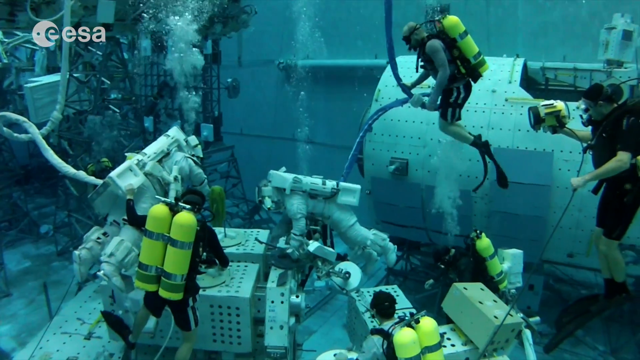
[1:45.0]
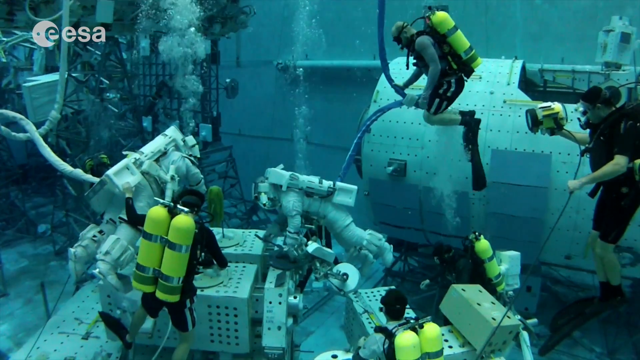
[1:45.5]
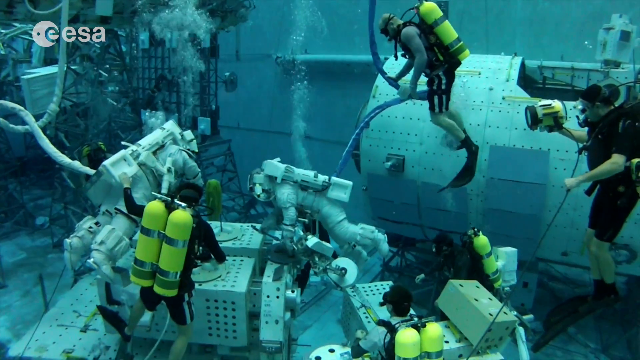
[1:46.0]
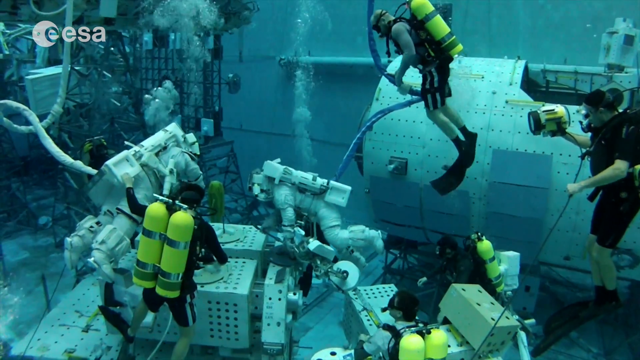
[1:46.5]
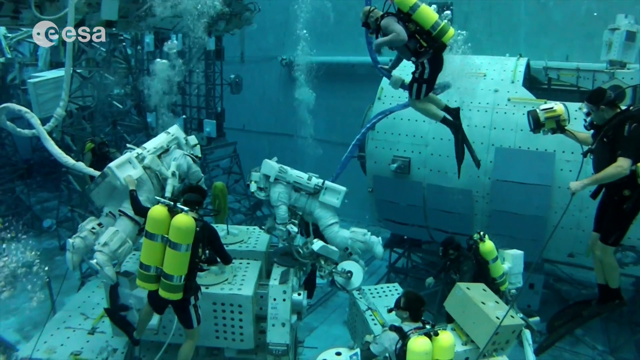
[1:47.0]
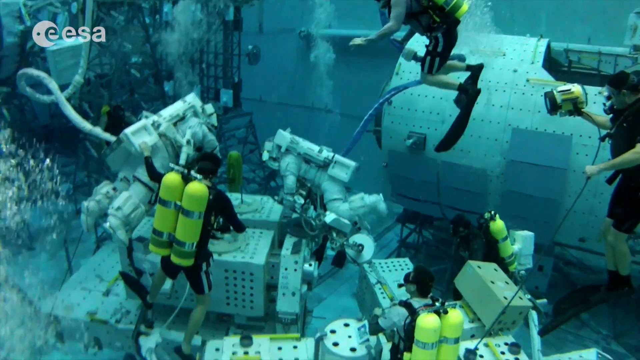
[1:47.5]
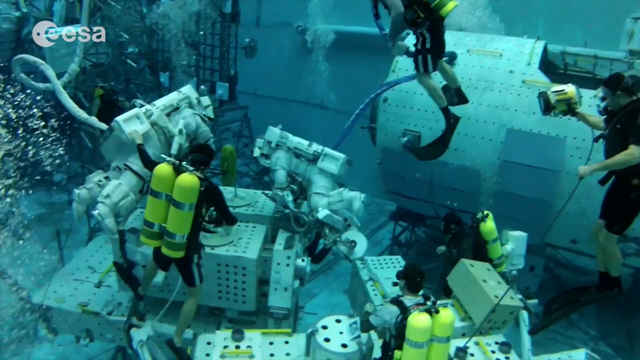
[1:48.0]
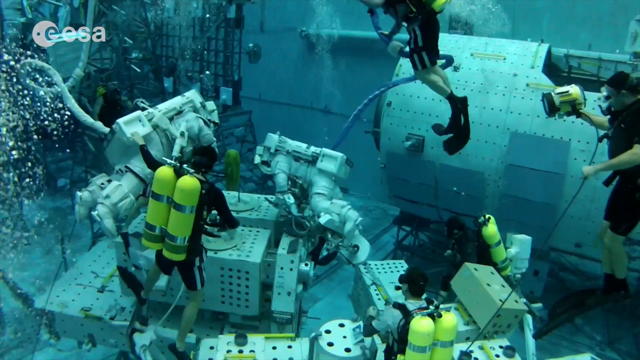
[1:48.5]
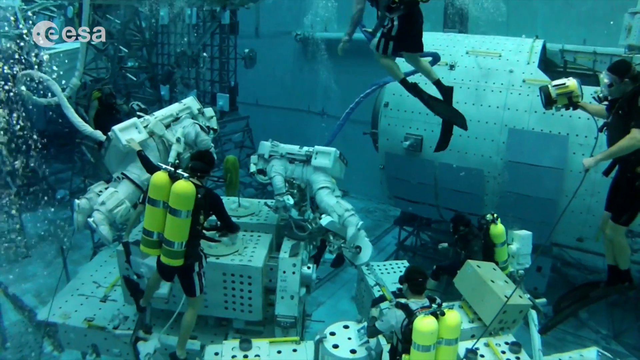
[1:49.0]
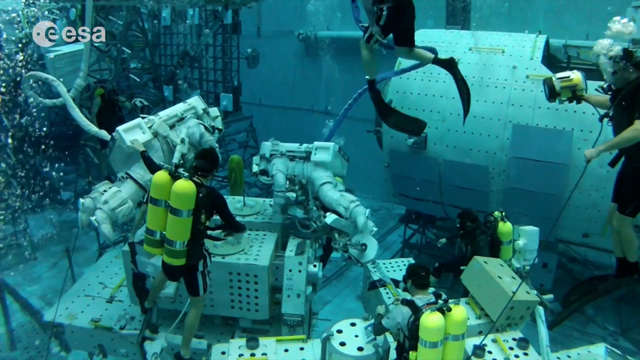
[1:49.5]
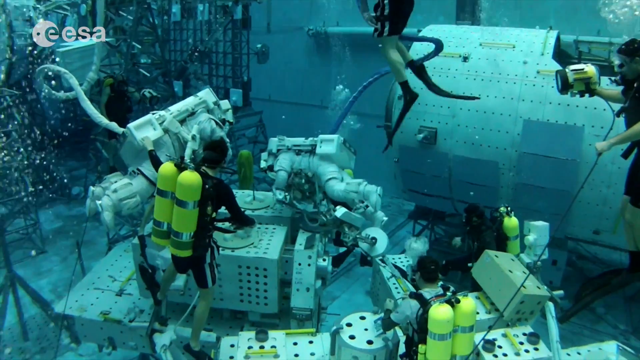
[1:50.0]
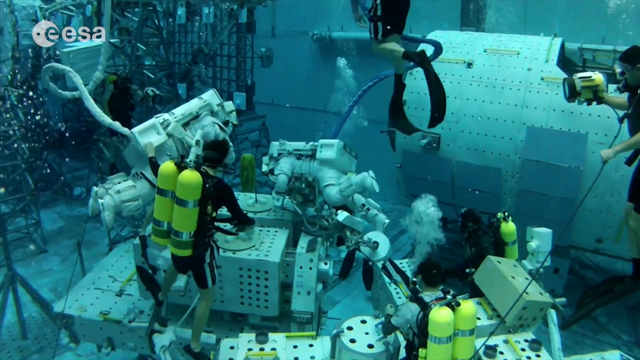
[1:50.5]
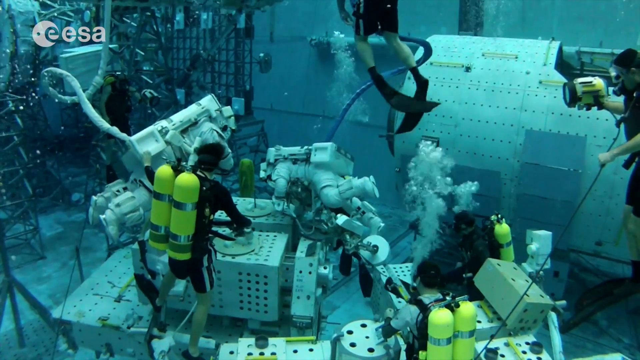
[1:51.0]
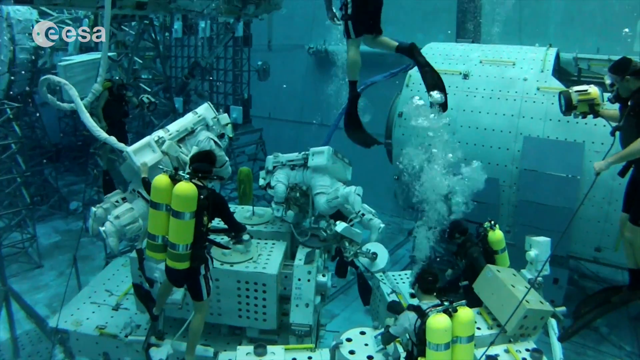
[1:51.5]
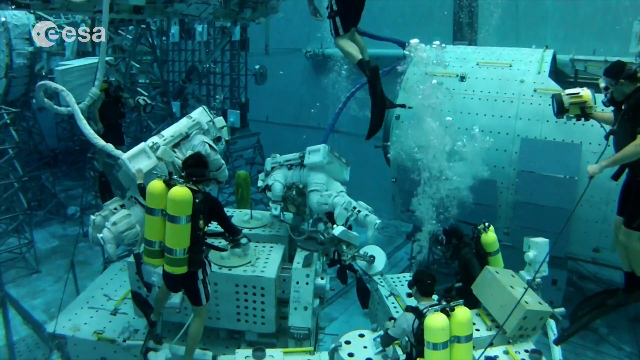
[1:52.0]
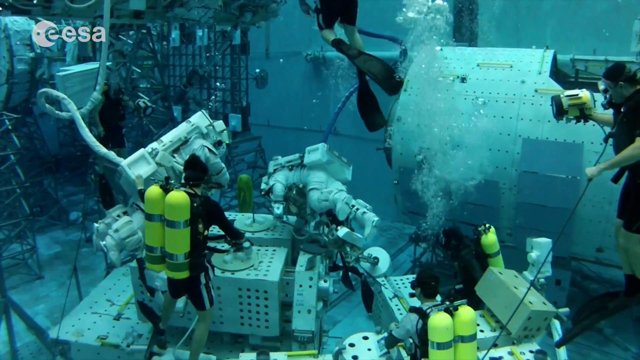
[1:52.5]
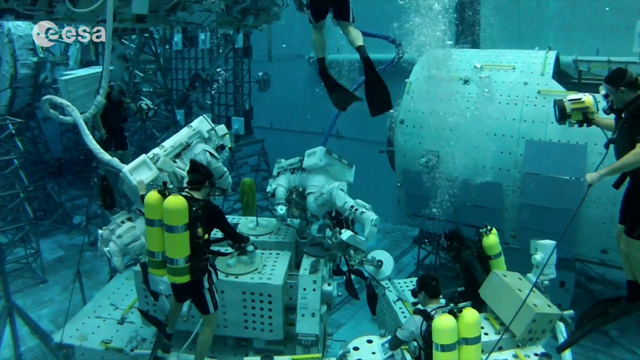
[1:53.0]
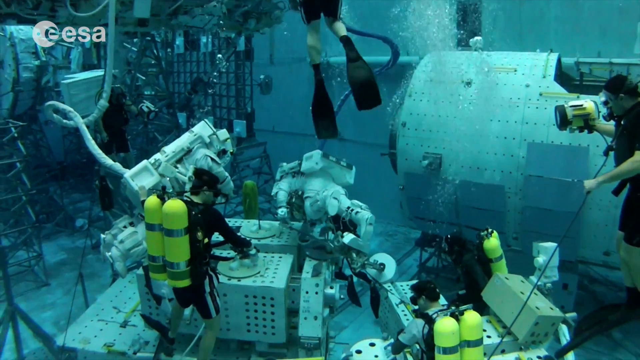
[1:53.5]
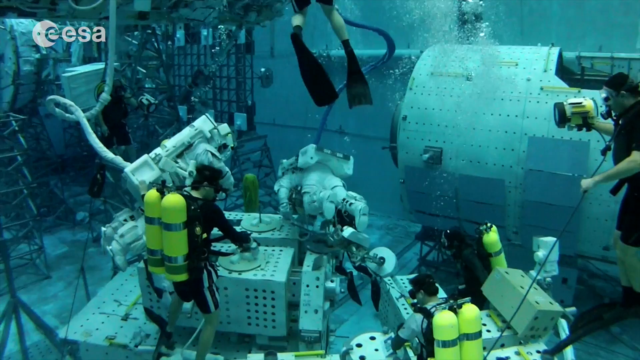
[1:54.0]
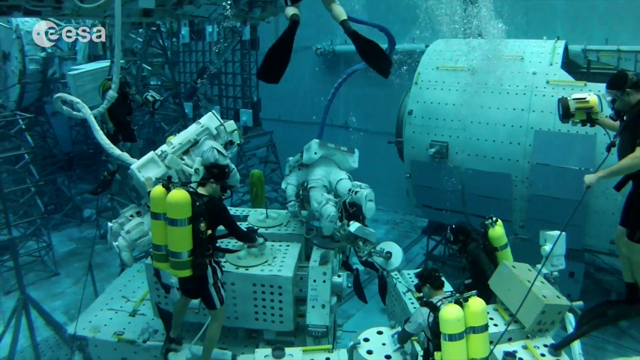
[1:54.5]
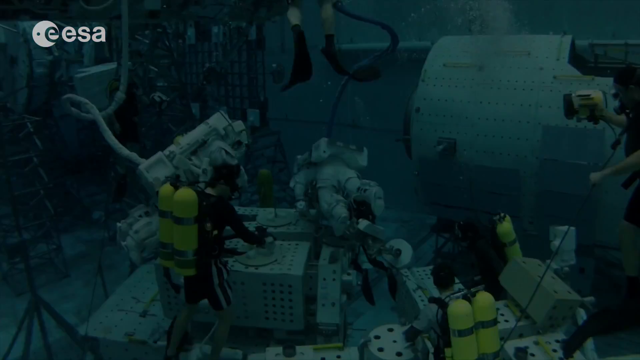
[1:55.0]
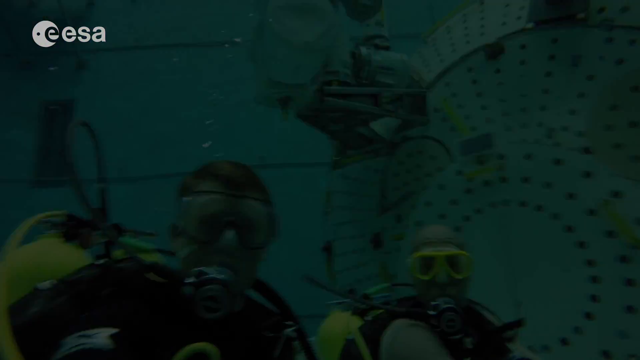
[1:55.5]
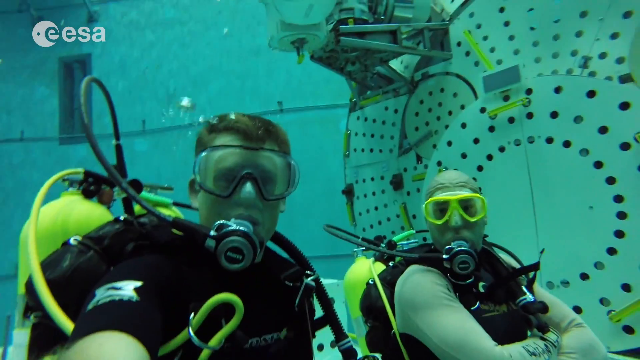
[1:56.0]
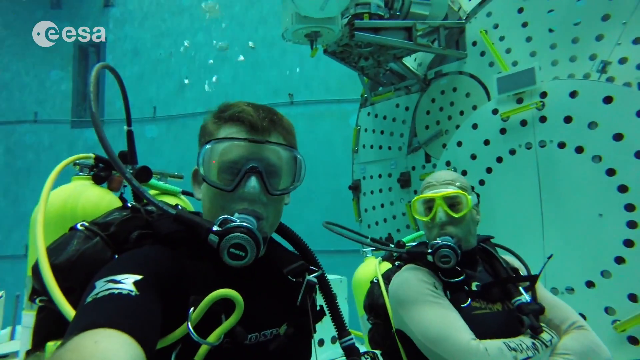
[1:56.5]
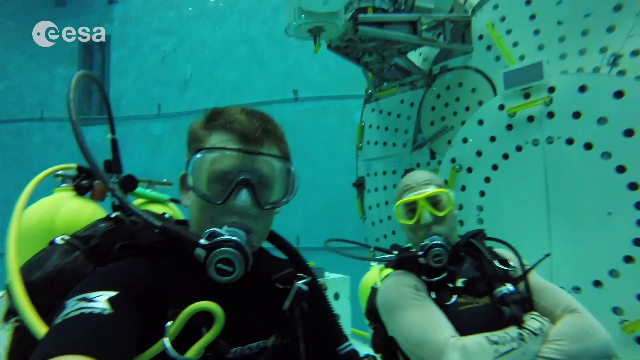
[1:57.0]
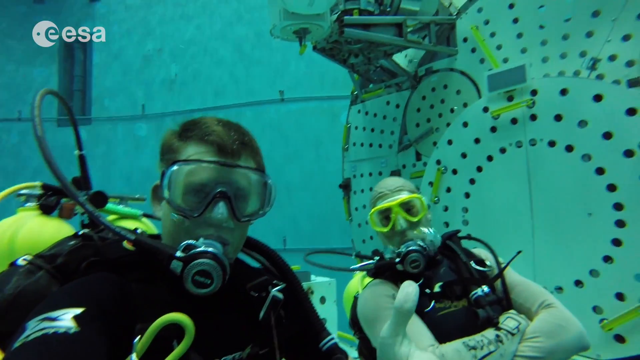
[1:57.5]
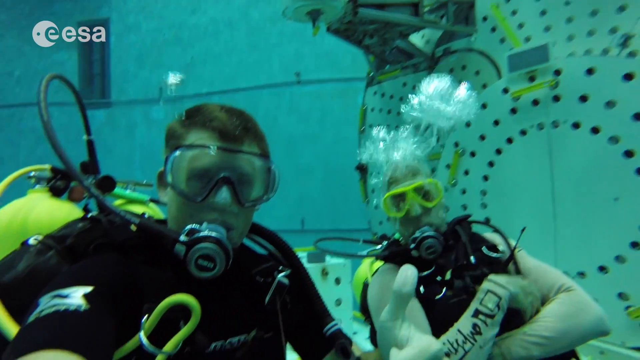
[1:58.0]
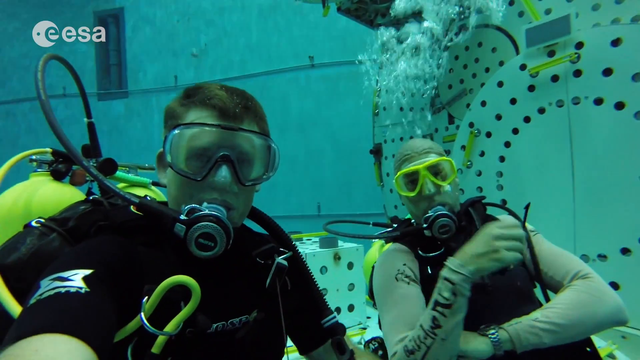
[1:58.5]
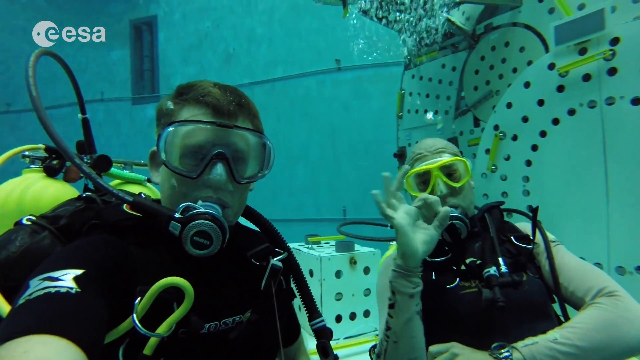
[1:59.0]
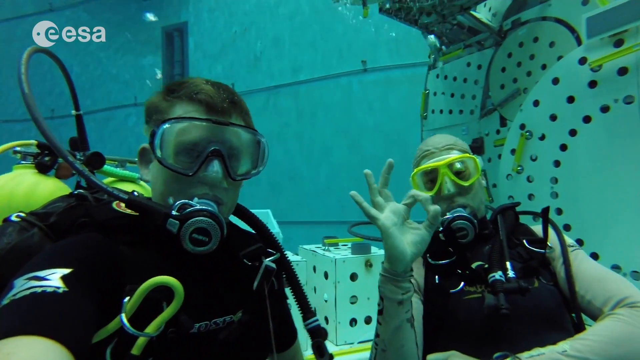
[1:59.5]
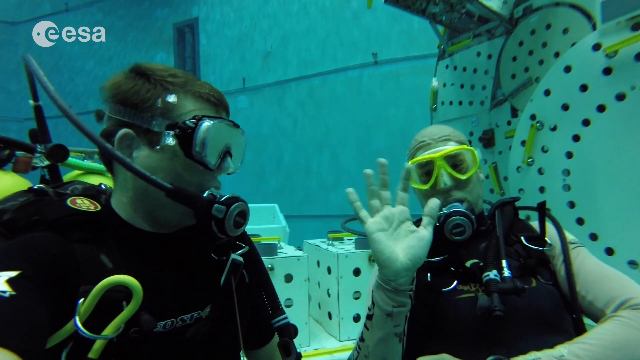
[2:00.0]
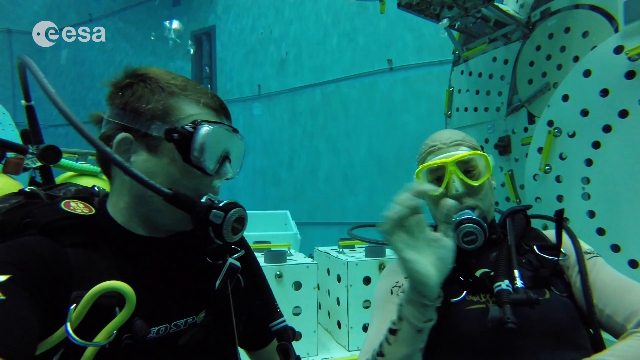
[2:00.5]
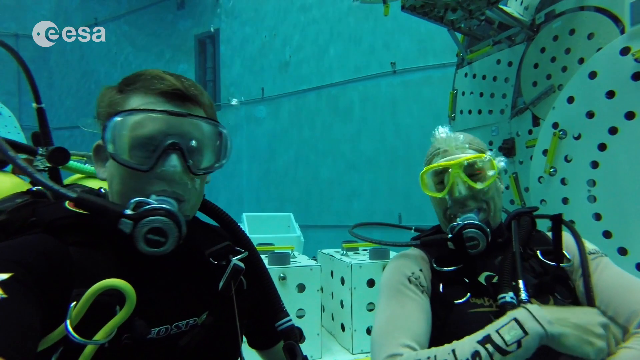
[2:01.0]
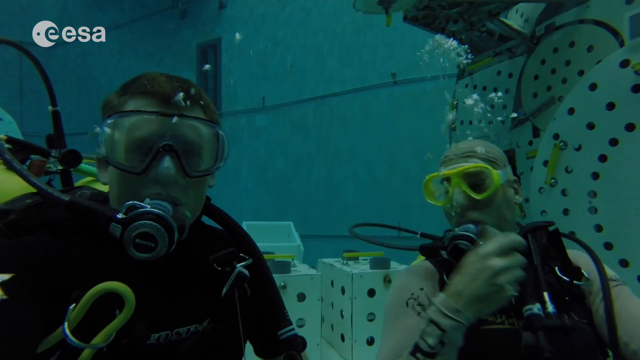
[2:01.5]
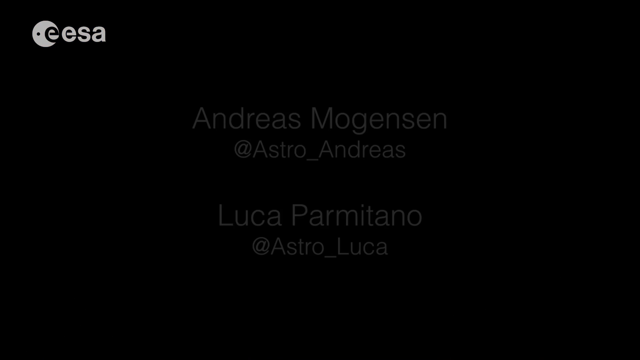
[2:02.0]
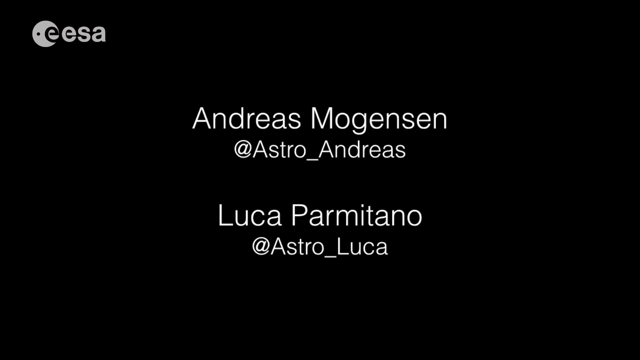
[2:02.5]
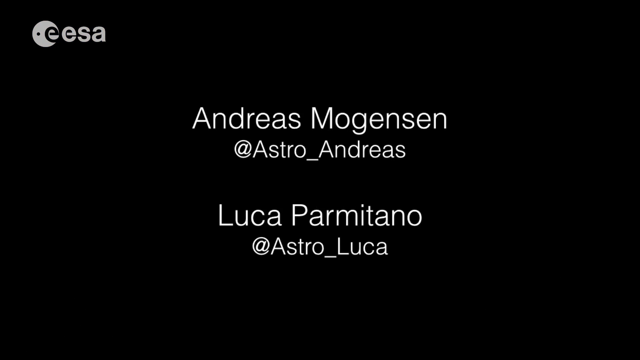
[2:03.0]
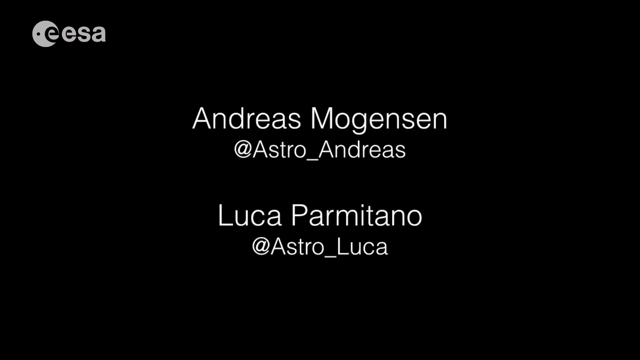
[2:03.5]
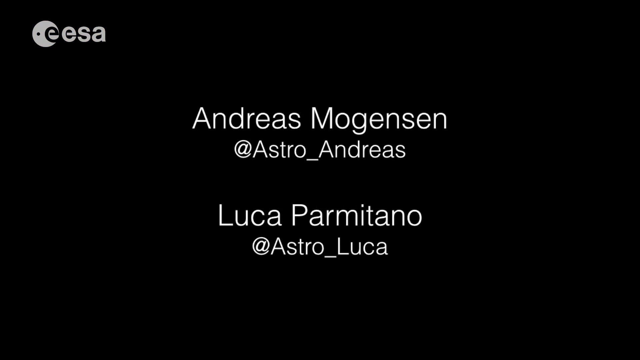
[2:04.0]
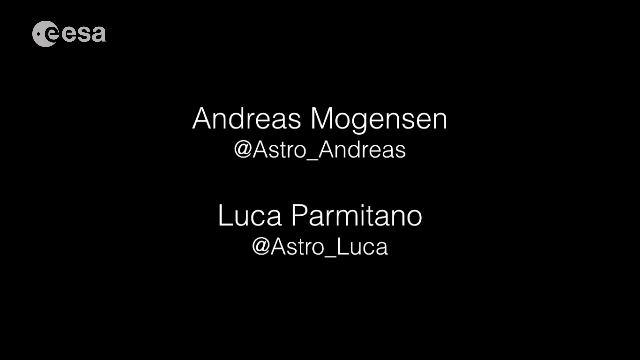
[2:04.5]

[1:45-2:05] The scuba divers are still around the two astronauts. One astronaut moves his legs a little, the first movement from them after being very stiff. Then the two men from the beginning appear underwater in all their gear, with white text reading "Andreas Mogensen @ Astro_Andreas" and "Luca Parmitano @ Astro_Luca". The man who seemed sleeveless actually has brown sleeves, and what looked like tattoos is lettering on the sleeves. He waves at the camera, makes the A-OK sign, and laughs around his mouthpiece, and the names are shown.